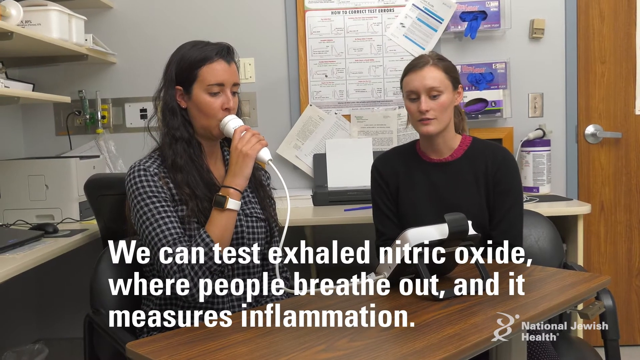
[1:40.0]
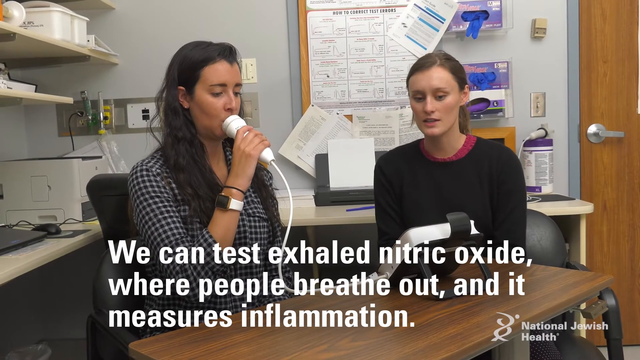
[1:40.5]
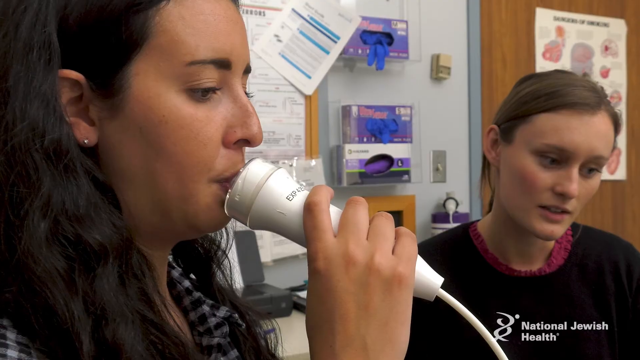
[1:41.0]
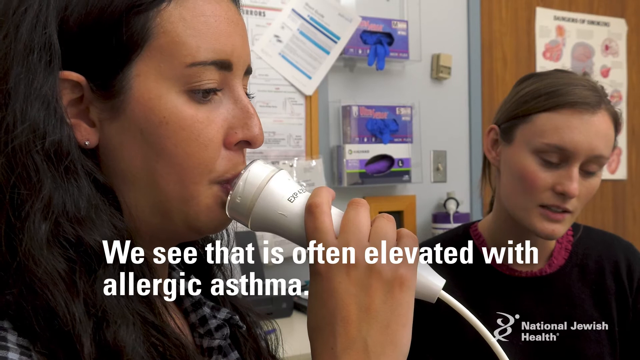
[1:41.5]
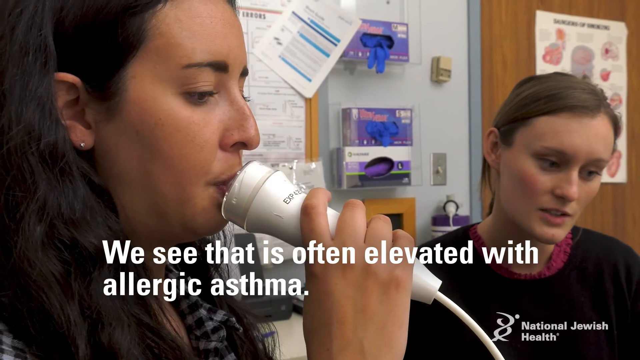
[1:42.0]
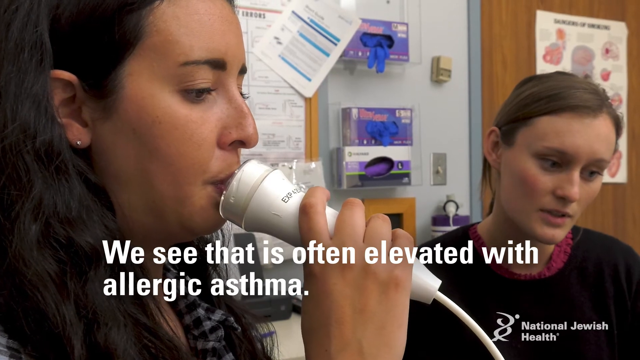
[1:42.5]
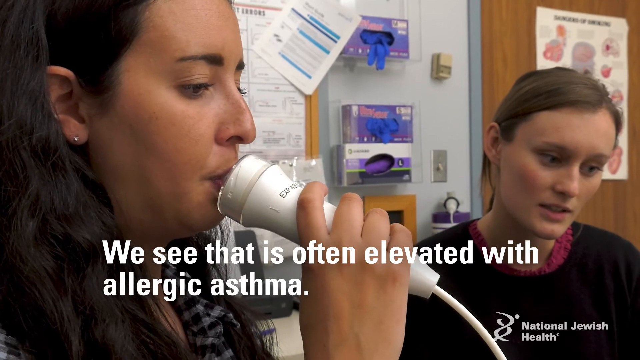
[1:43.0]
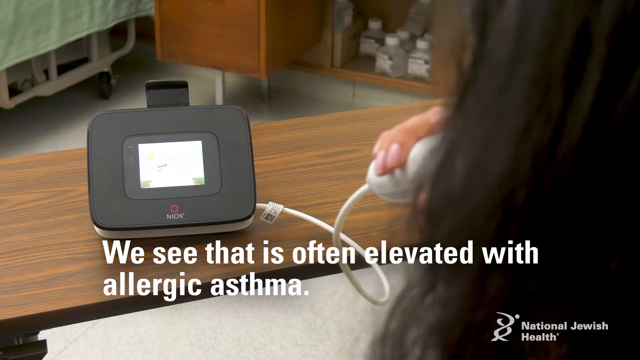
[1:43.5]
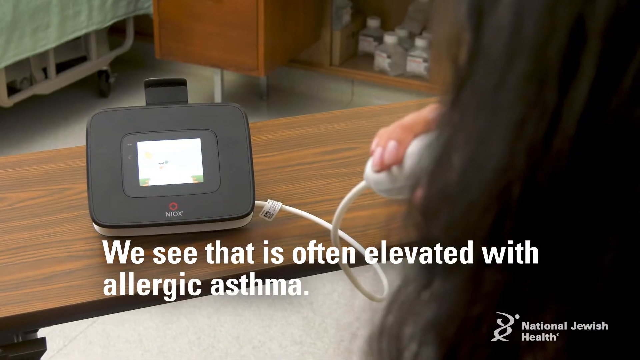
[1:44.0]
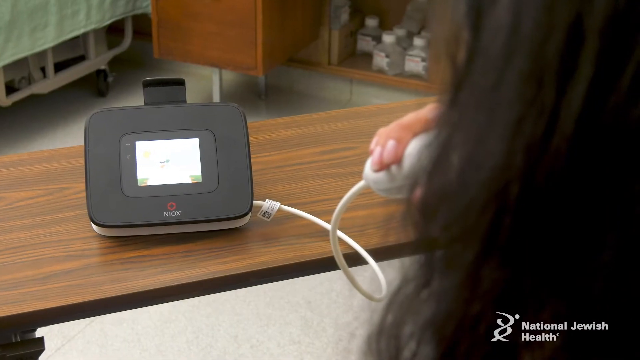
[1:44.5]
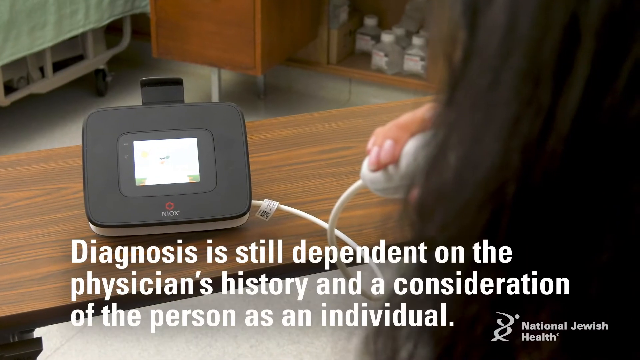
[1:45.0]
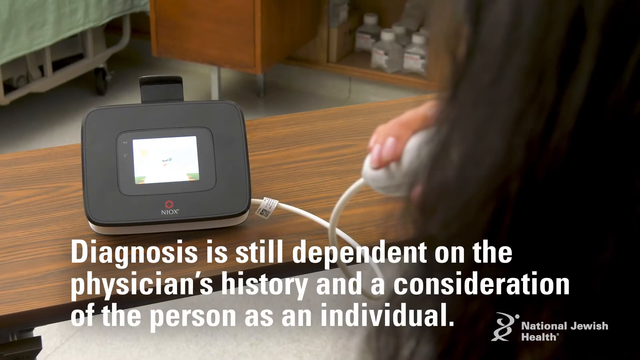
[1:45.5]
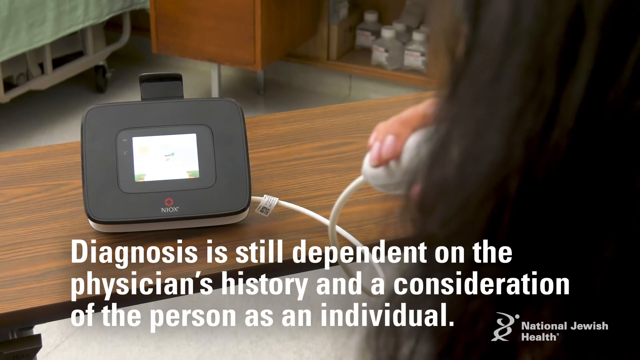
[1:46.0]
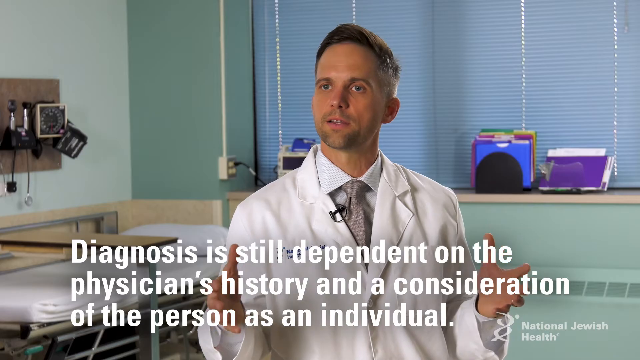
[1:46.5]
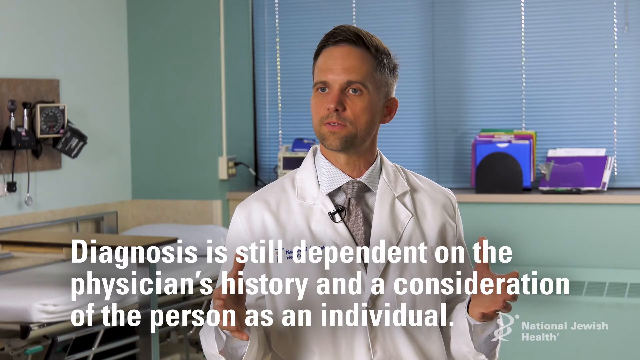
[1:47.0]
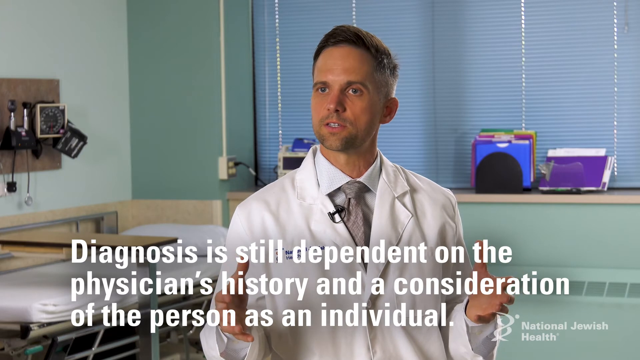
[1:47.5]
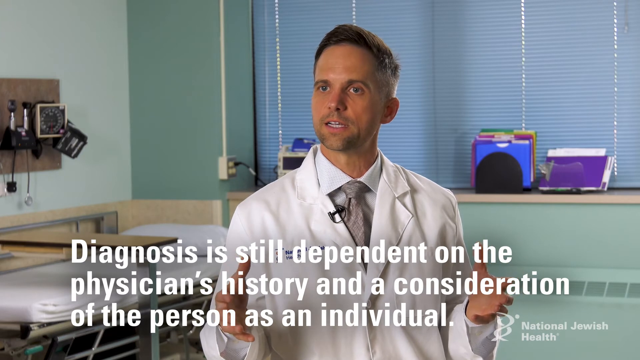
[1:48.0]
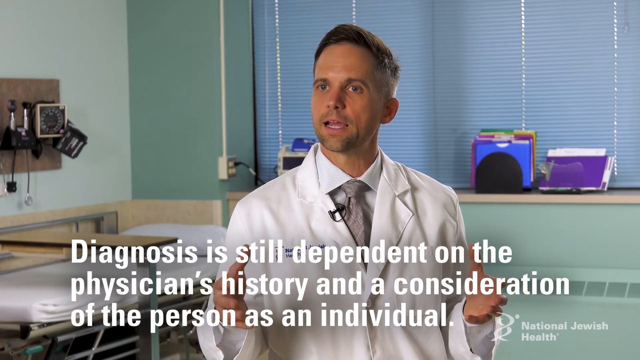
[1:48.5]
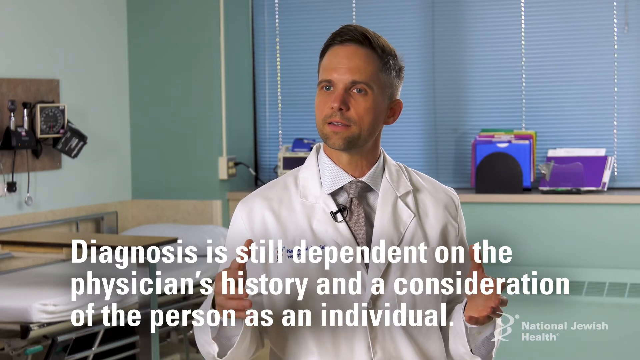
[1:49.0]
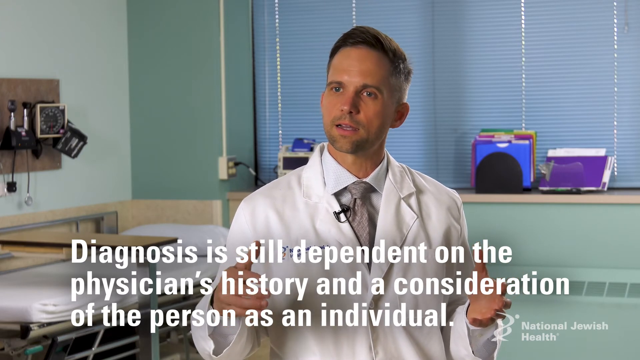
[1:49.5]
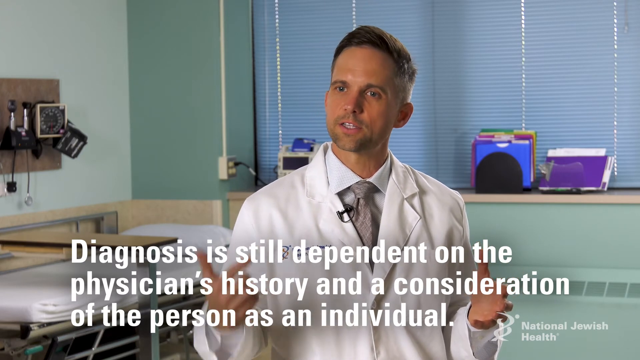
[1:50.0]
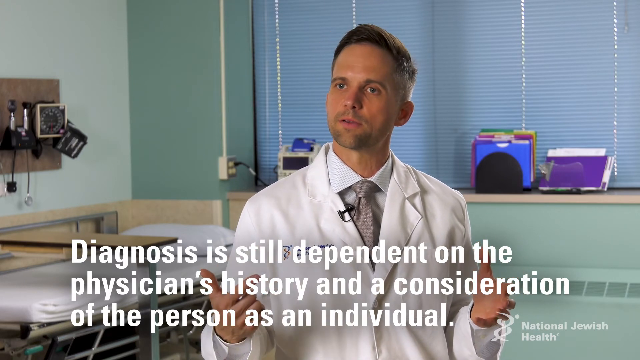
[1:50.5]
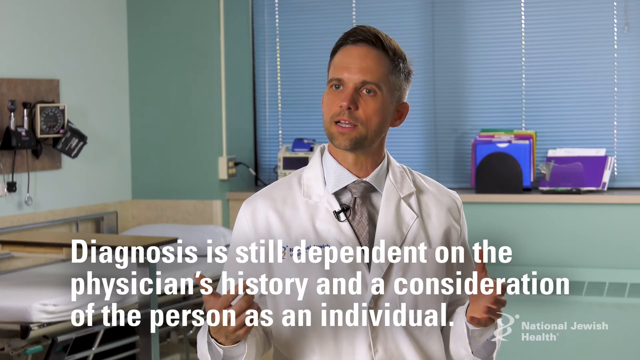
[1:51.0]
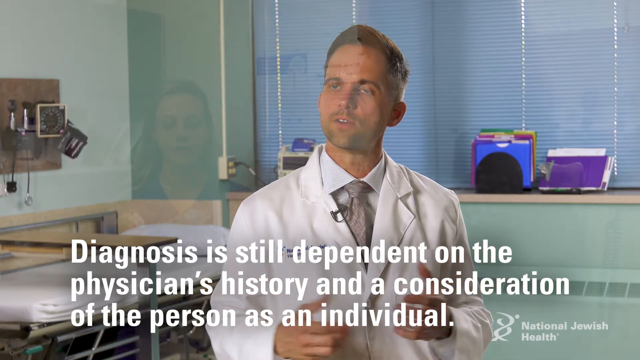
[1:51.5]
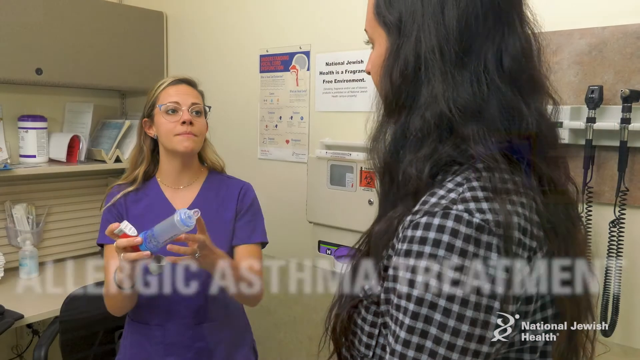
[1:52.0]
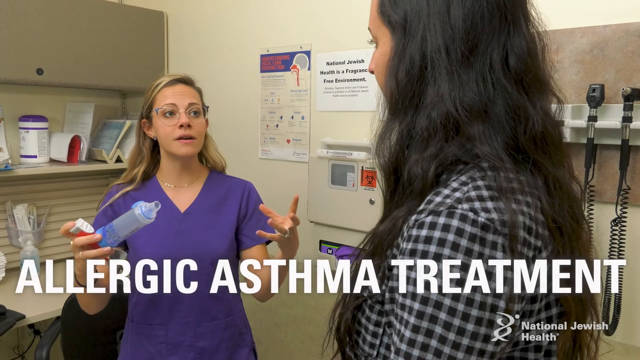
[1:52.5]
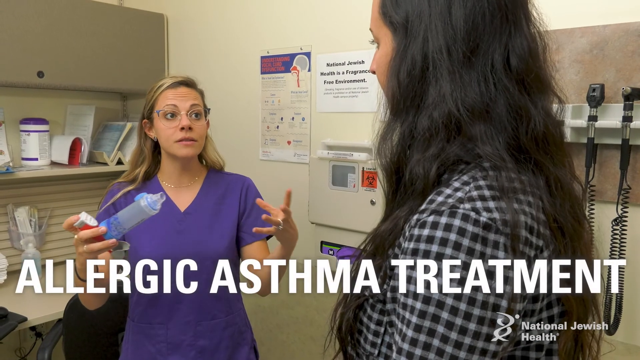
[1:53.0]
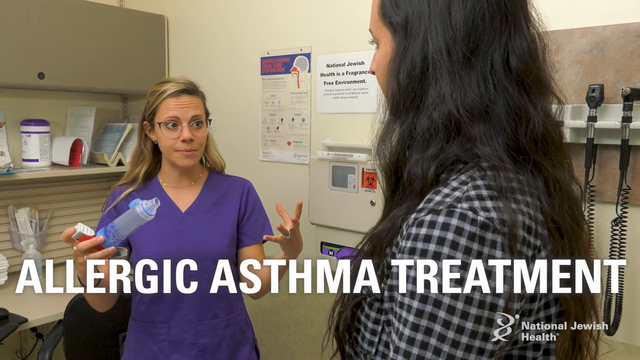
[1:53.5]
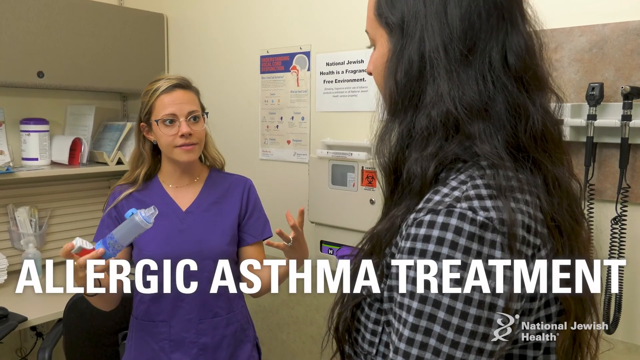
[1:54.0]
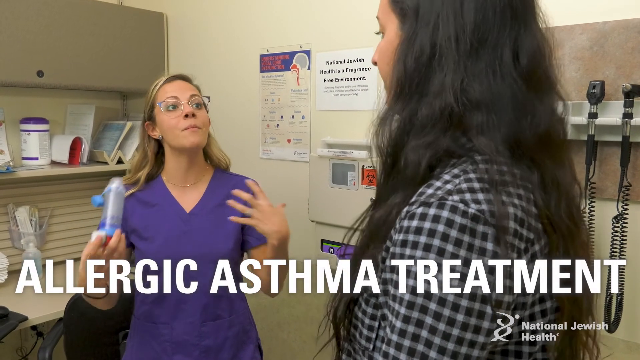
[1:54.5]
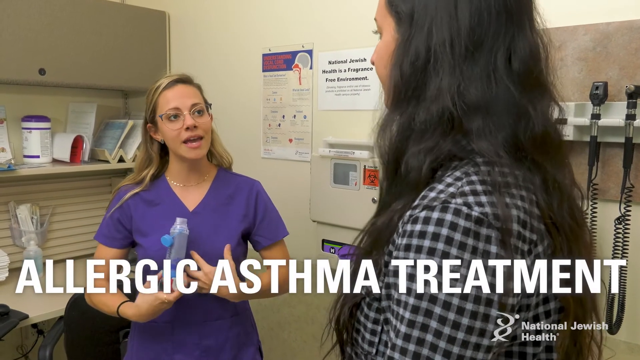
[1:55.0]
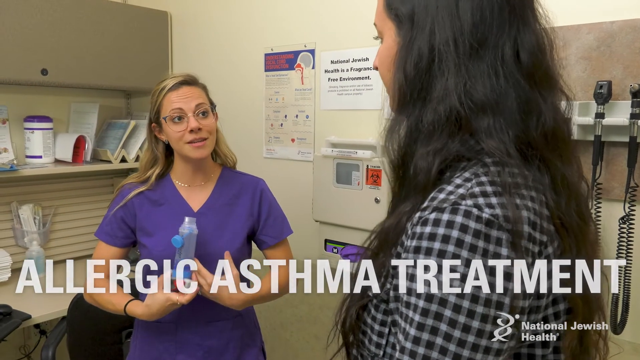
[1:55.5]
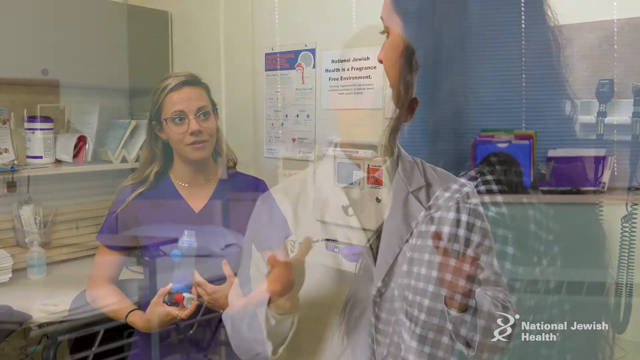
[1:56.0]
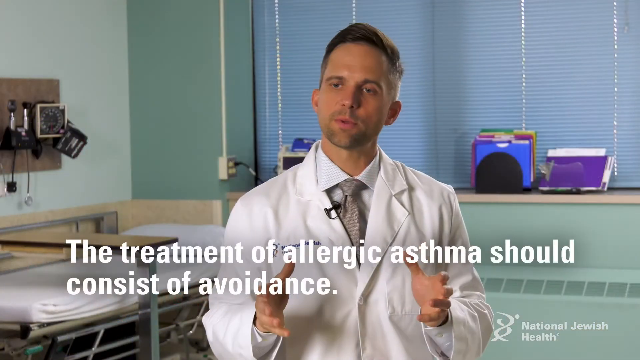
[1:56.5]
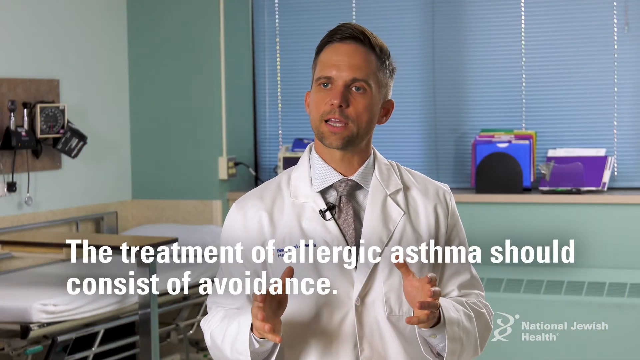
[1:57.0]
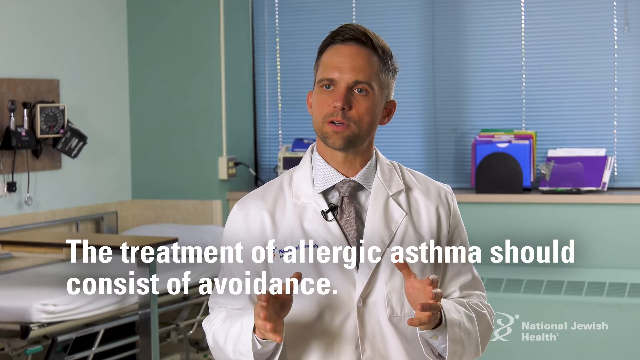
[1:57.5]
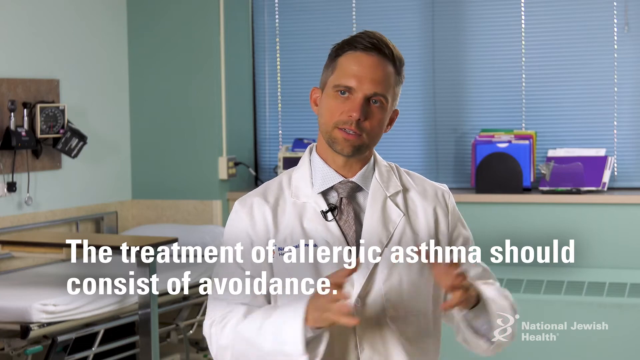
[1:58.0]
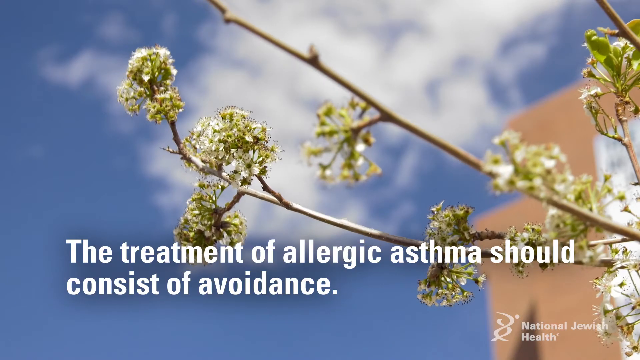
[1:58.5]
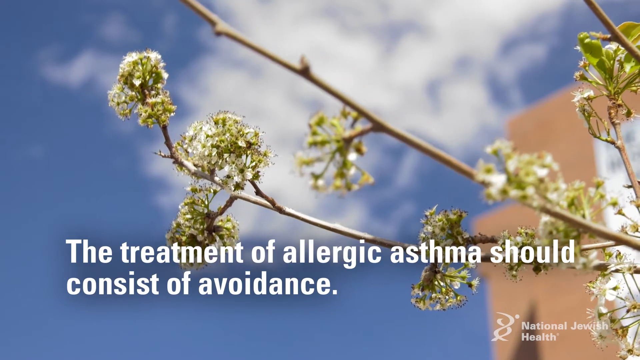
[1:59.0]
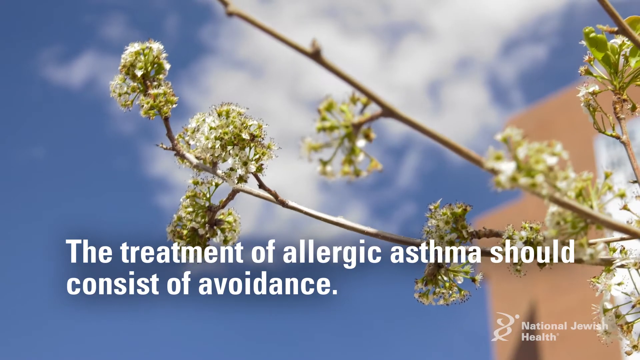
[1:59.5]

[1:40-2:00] A woman with long black hair, wearing a checked shirt, holds a white thing to her mouth while a nurse administers the tests, apparently in a doctor's office. Text reads "we can test exhaled nitric oxide where people breathe out and it measures inflammation. we see that is often elevated with allergic asthma". The man is still talking. The nurse and the patient appear again; the nurse holds what looks like a spacer for an emergency inhaler, and text underneath reads "allergic asthma treatment". The nurse seems to be explaining something to her, and she points to her tummy. Then the text reads "the treatment of allergic asthma should consist of avoidance".